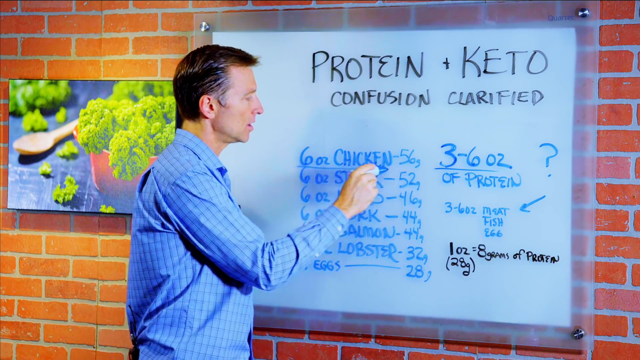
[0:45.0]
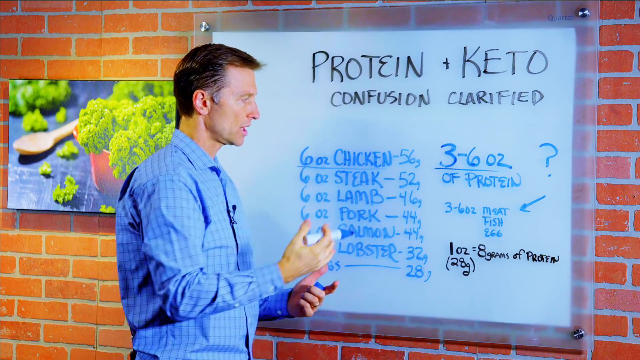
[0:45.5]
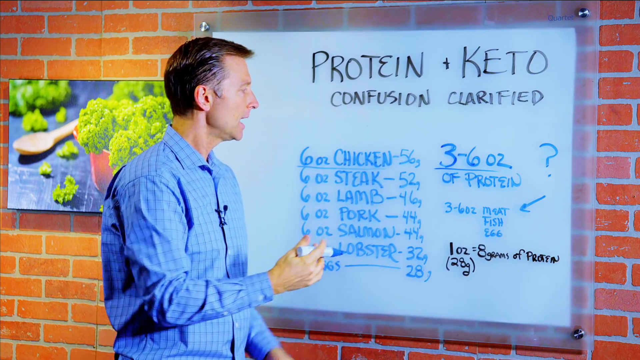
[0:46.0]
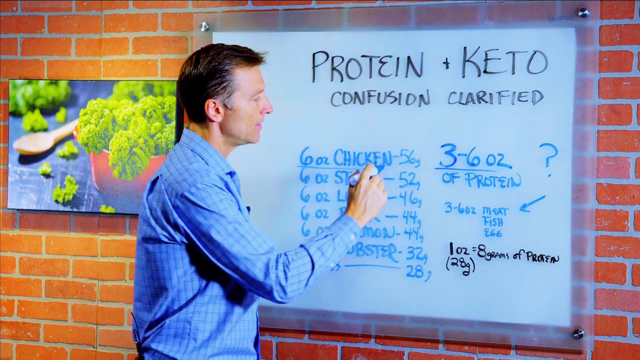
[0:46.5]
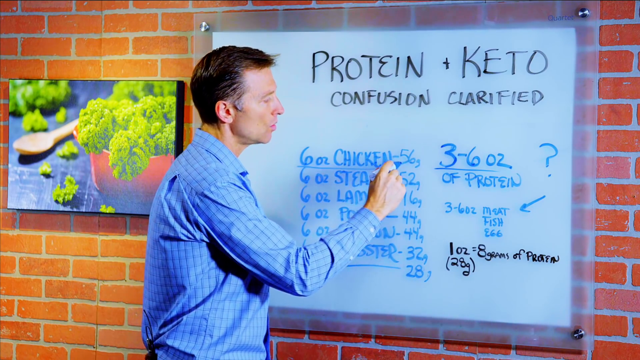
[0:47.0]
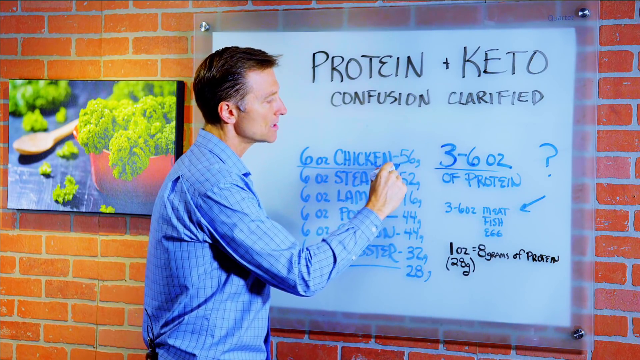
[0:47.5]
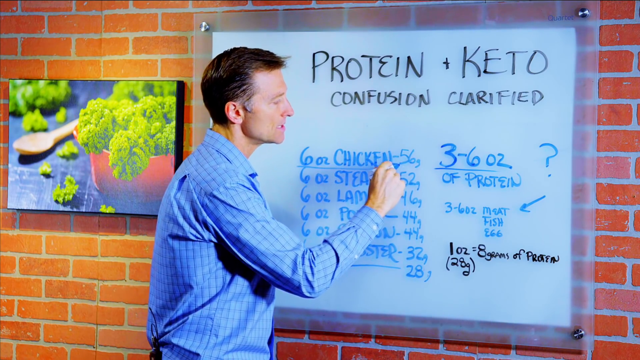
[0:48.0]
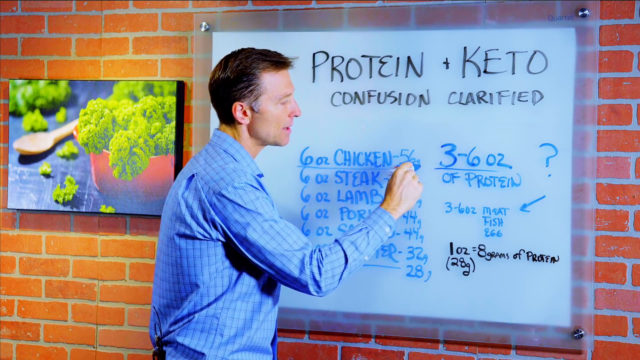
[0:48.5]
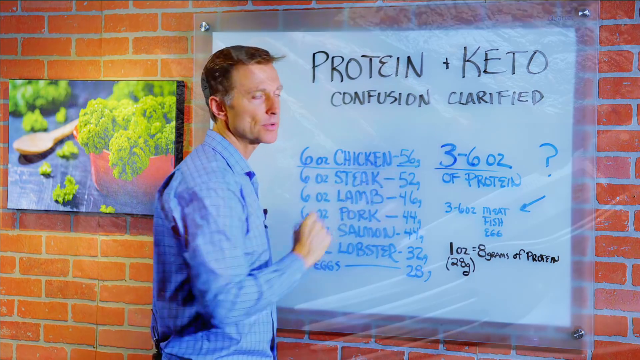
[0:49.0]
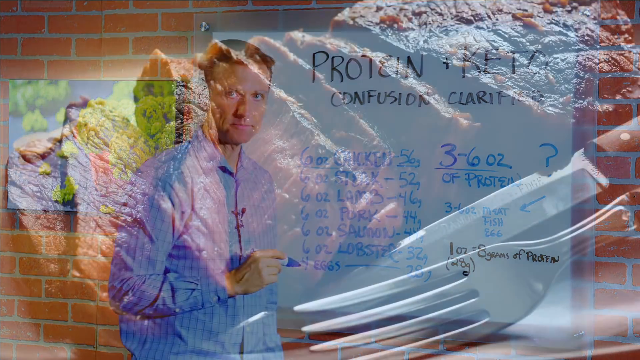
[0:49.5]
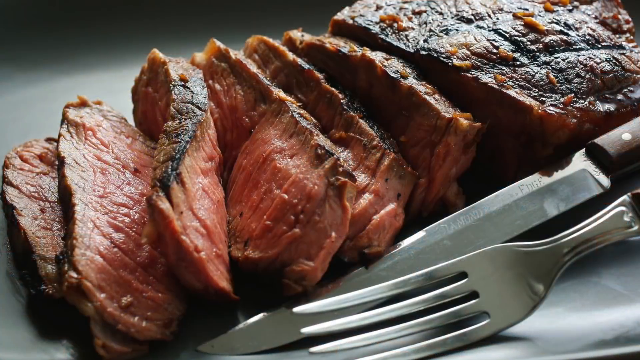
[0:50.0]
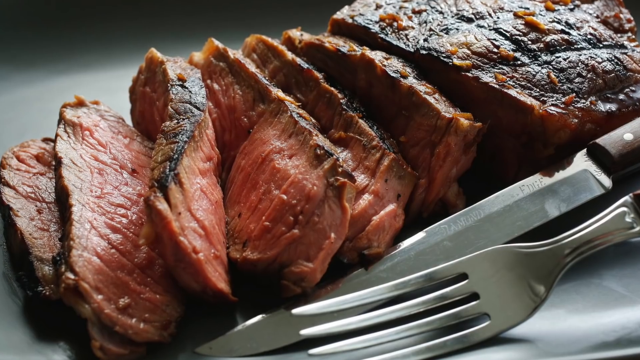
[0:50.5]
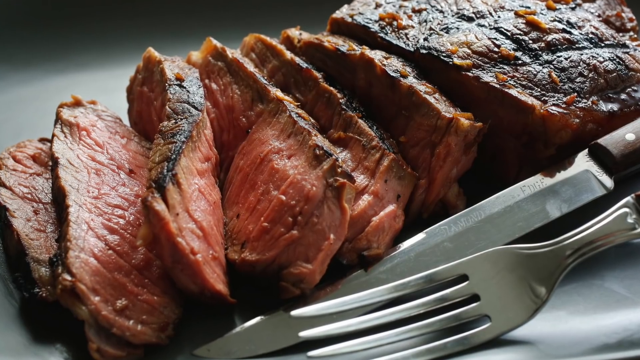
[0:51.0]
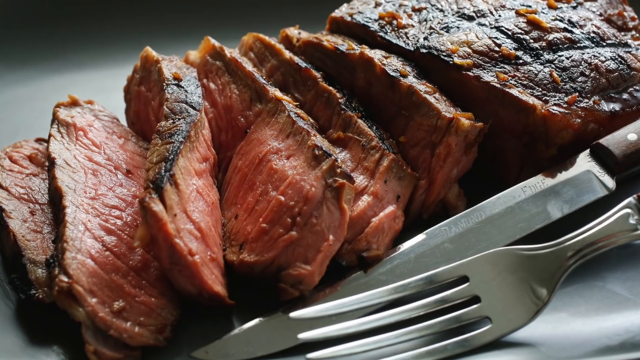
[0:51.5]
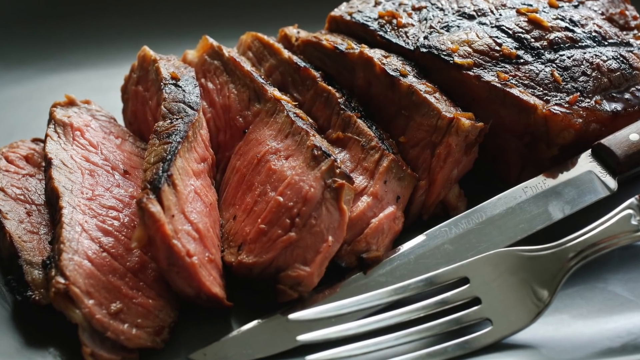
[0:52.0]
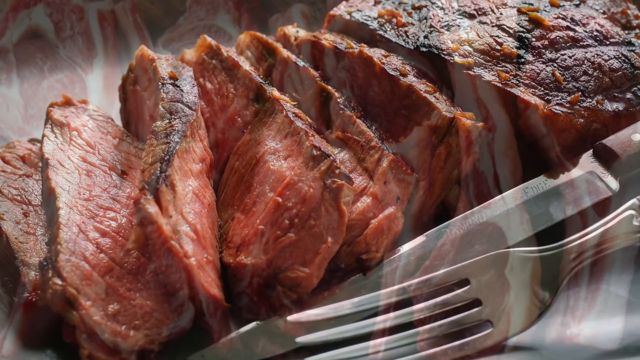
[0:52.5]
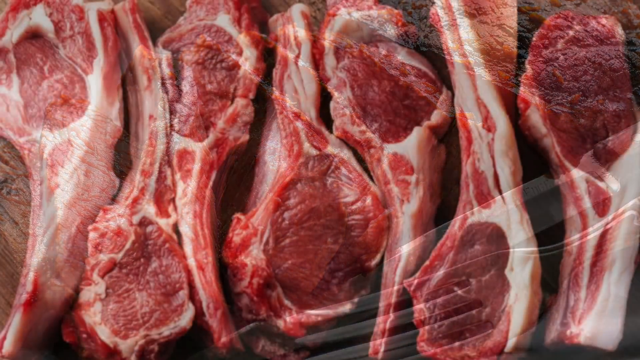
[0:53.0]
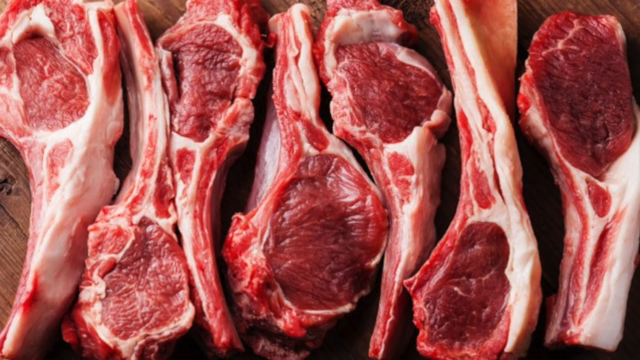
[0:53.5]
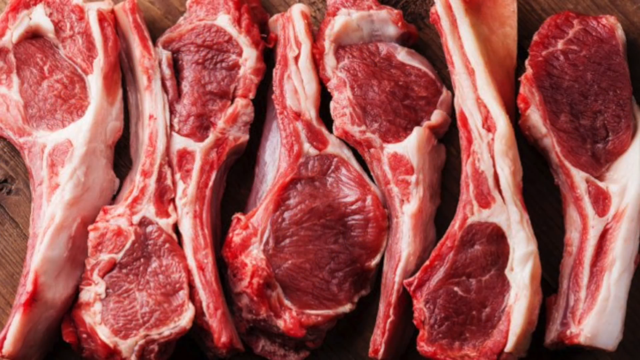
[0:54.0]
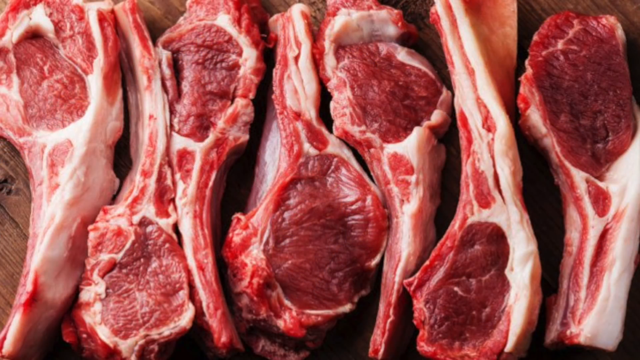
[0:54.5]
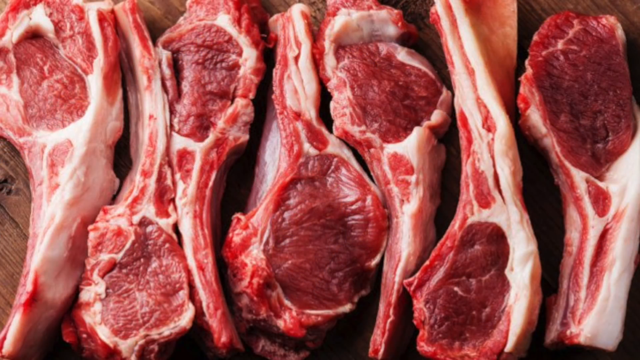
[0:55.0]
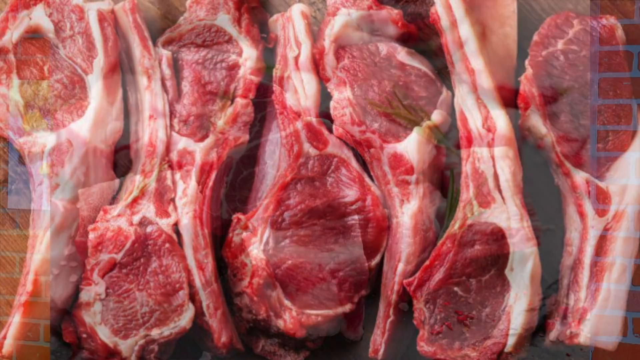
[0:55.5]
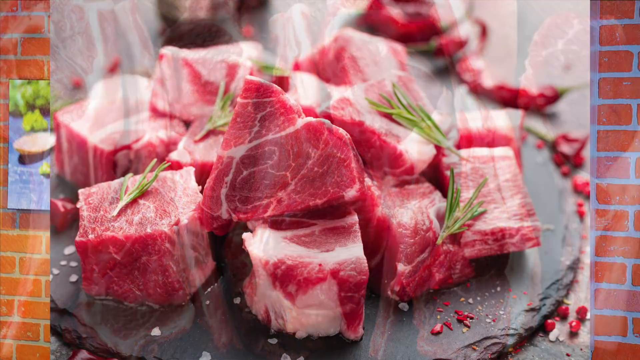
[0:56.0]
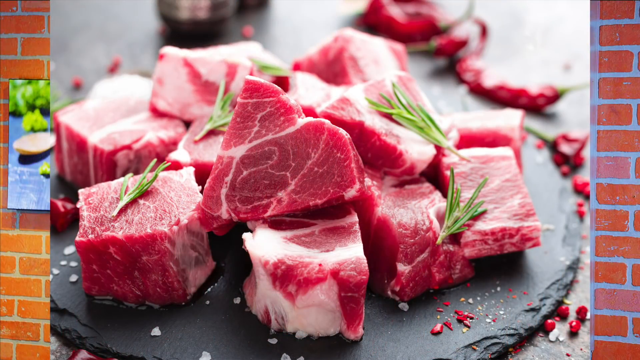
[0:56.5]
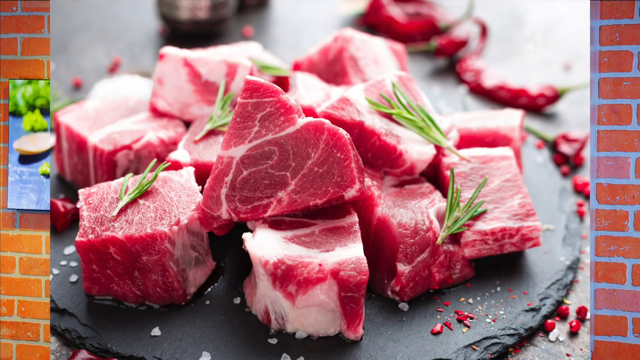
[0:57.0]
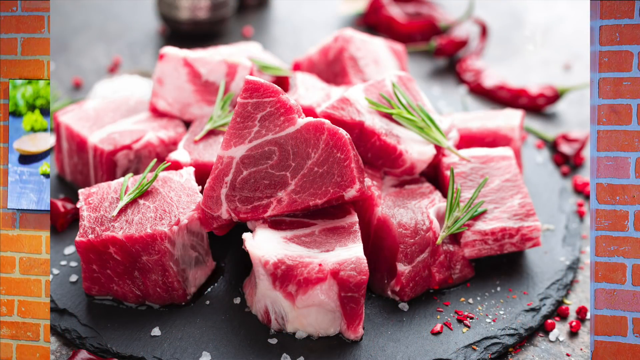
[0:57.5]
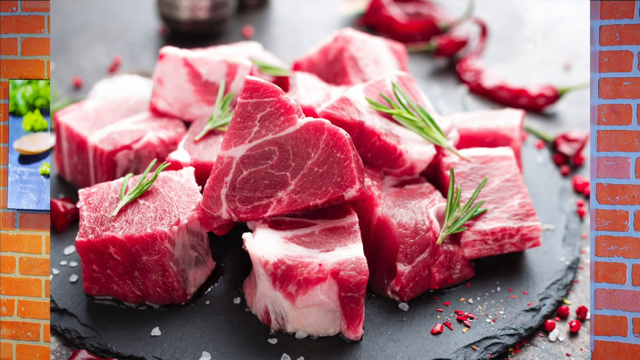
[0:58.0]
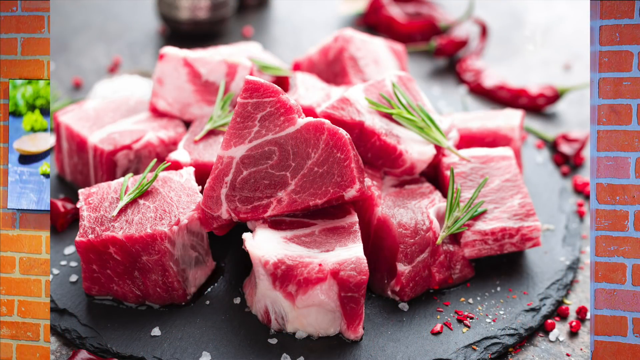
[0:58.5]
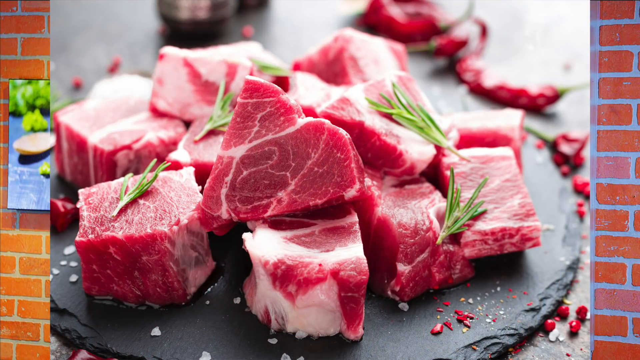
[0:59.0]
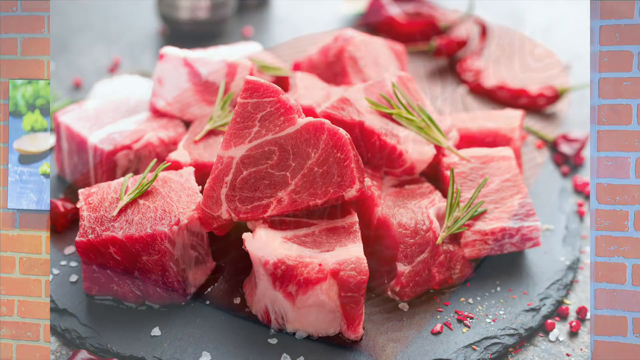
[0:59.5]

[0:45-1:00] The man is still at the board. The background is a green screen made to look like a brick wall, with a portrait on his left side of leafy greens in a bowl and a wooden spoon; the whiteboard itself is real. He continues to point and gesture at it, pointing out each individual line of blue text. The camera pans back a bit, and the video cuts to stock photos of the things he is pointing to: first a cooked steak, sliced and portioned on a plate with a knife and fork; then an entire tray of some sort of raw pork chops or steak chops pointing in different directions; then cubes of meat decorated with green herbs on a black slate surface; and then a piece of raw salmon laying on a white background or some sort of plank.